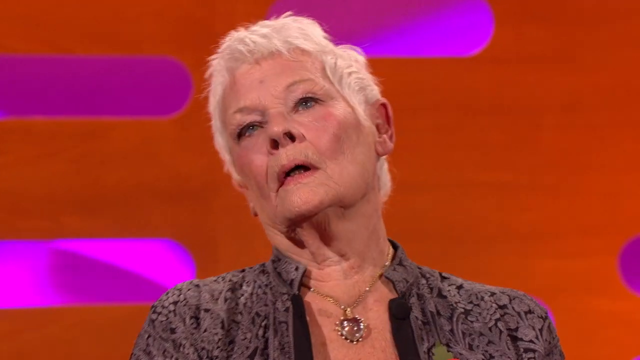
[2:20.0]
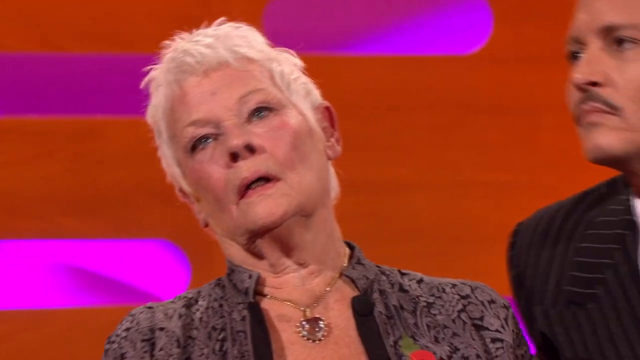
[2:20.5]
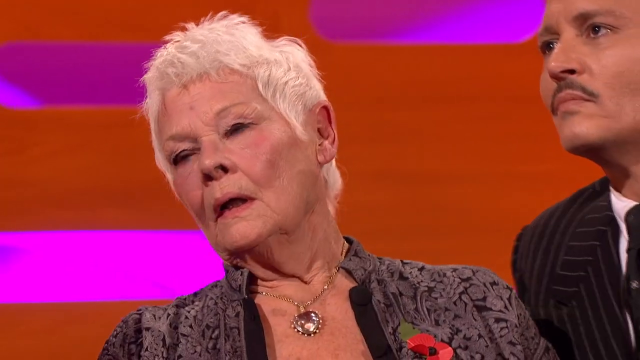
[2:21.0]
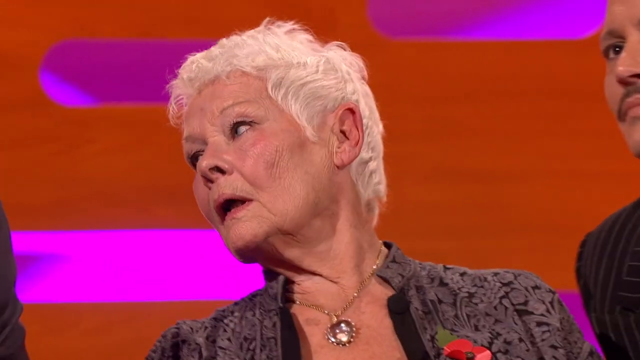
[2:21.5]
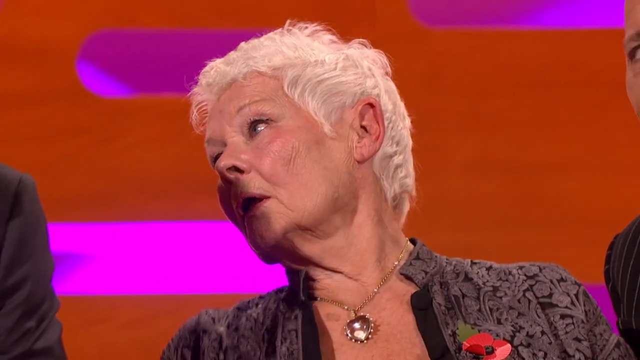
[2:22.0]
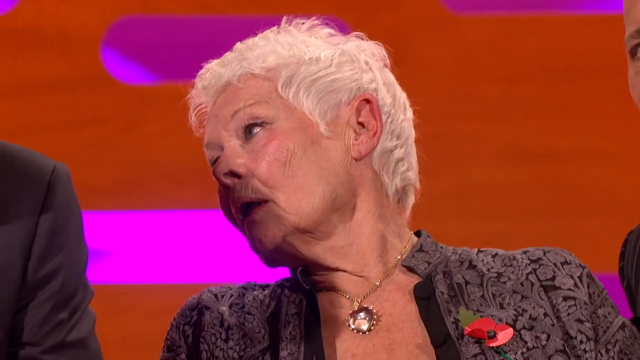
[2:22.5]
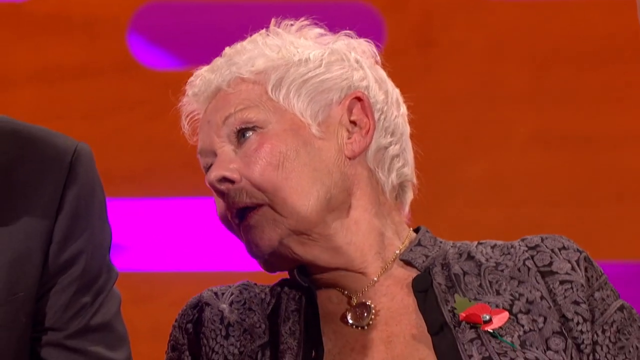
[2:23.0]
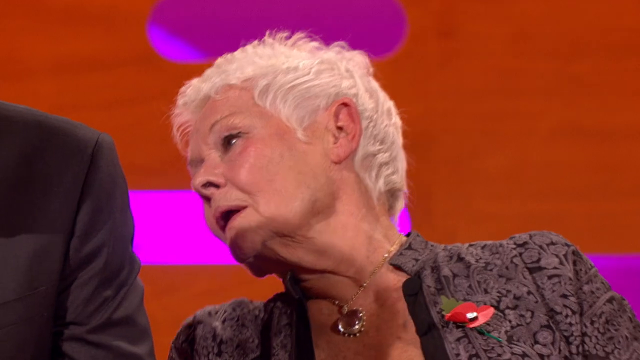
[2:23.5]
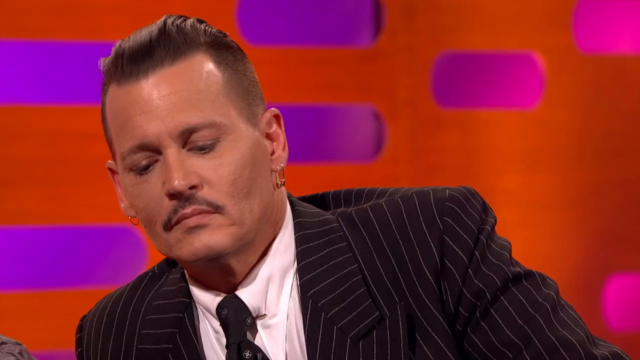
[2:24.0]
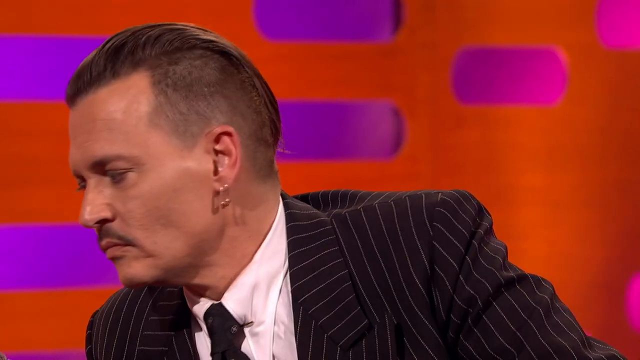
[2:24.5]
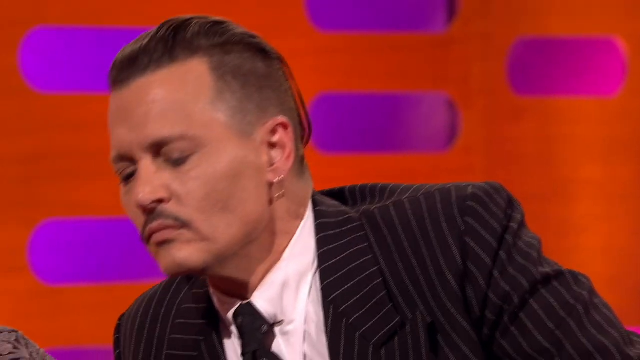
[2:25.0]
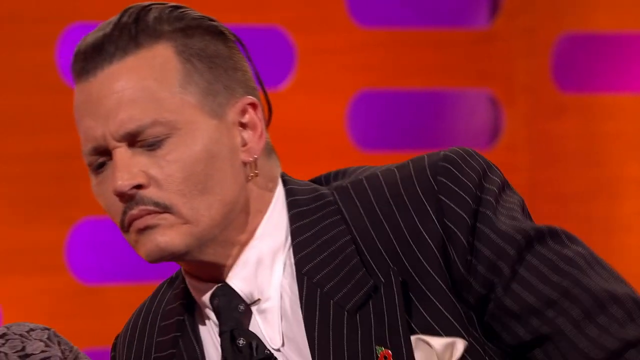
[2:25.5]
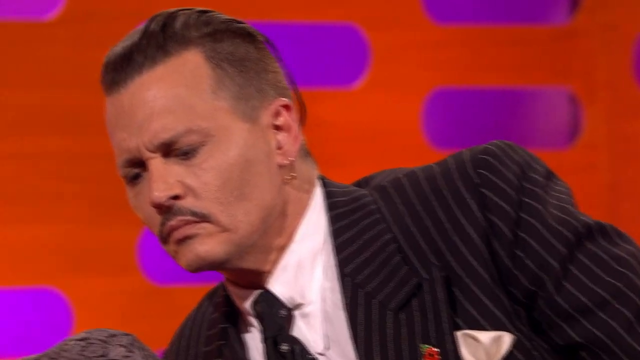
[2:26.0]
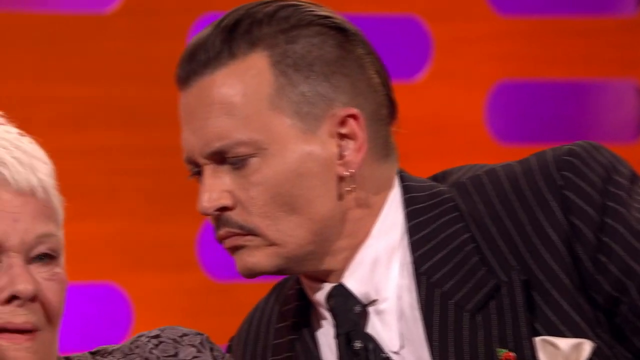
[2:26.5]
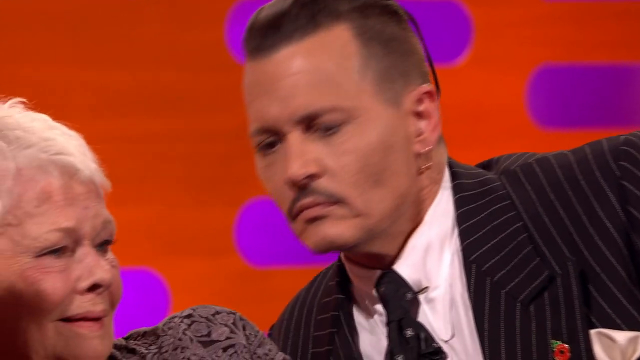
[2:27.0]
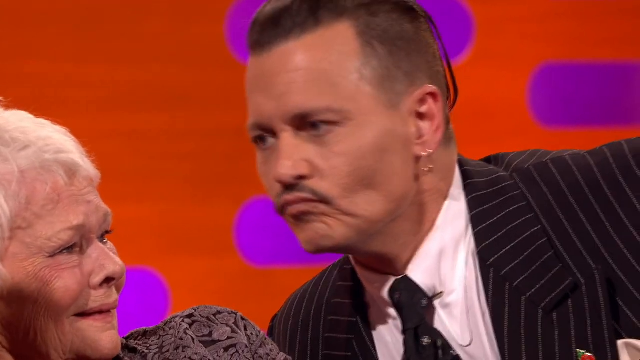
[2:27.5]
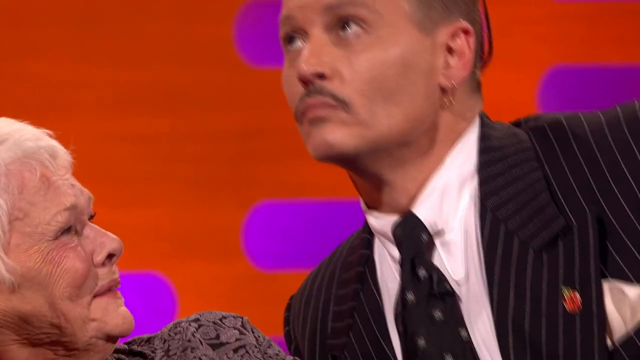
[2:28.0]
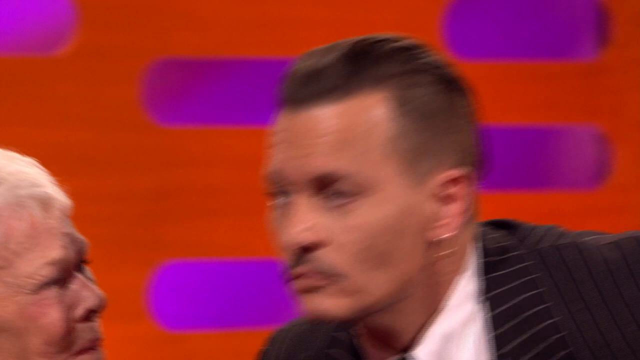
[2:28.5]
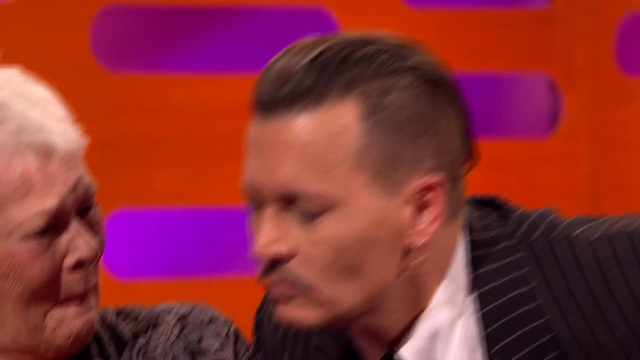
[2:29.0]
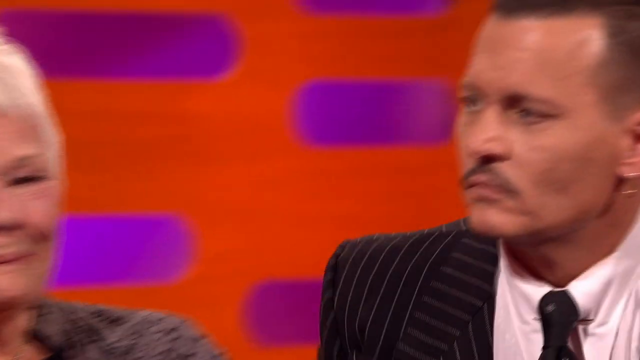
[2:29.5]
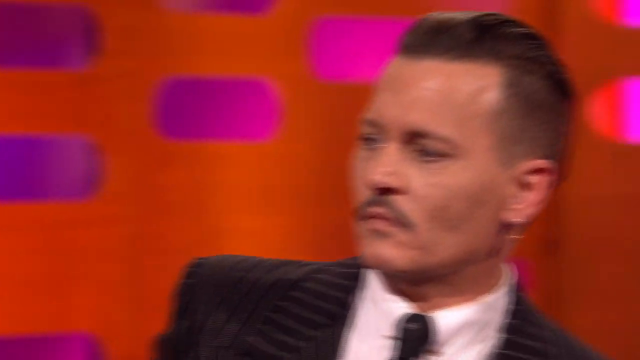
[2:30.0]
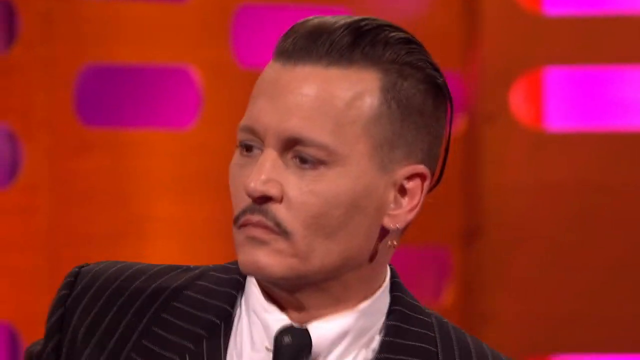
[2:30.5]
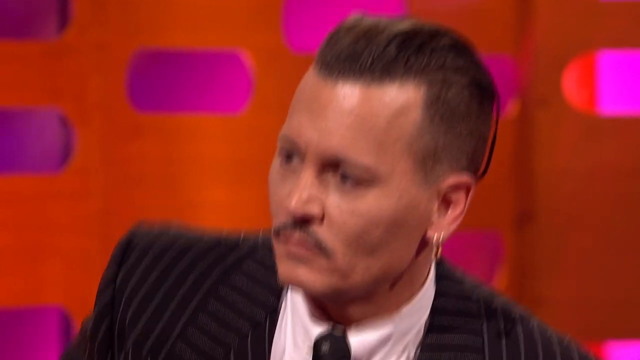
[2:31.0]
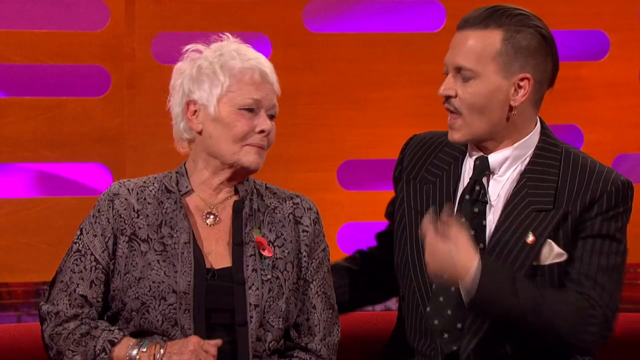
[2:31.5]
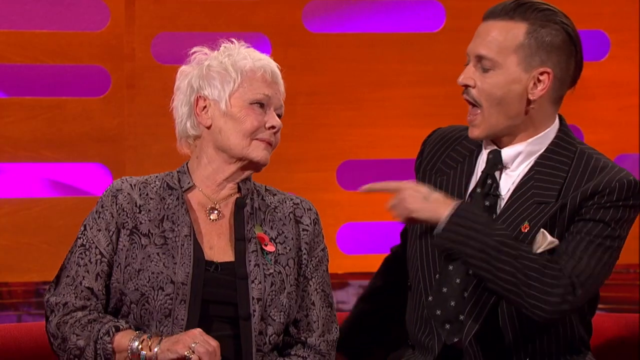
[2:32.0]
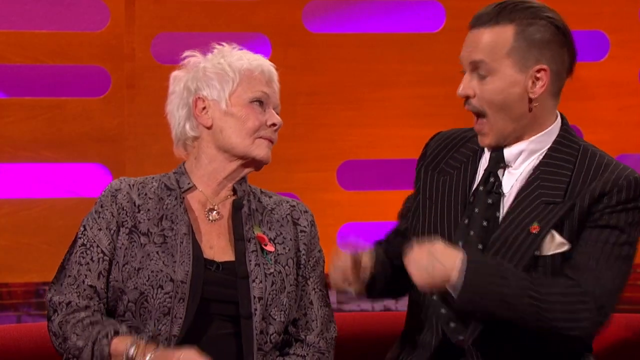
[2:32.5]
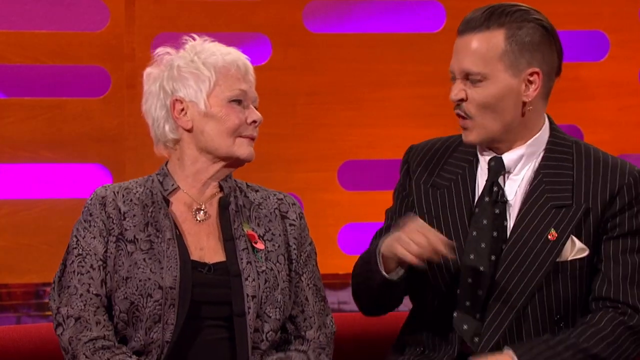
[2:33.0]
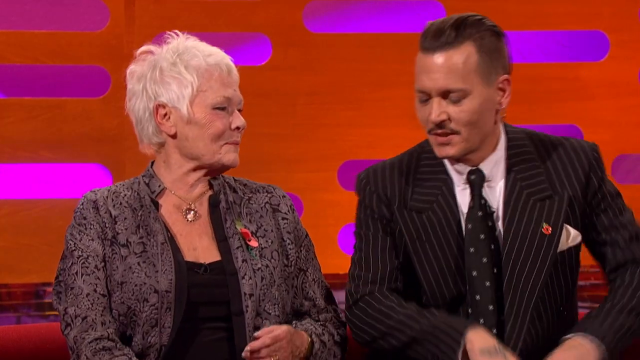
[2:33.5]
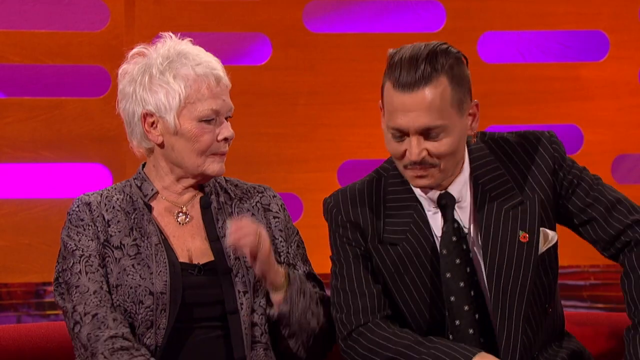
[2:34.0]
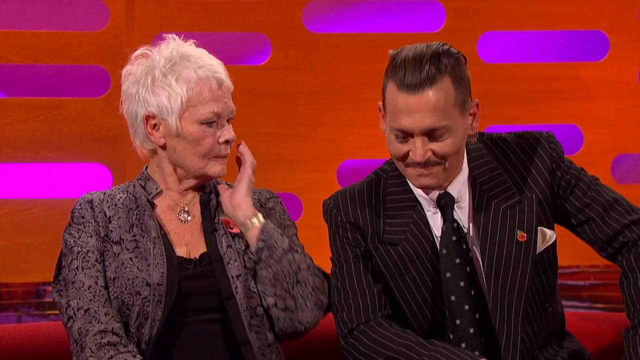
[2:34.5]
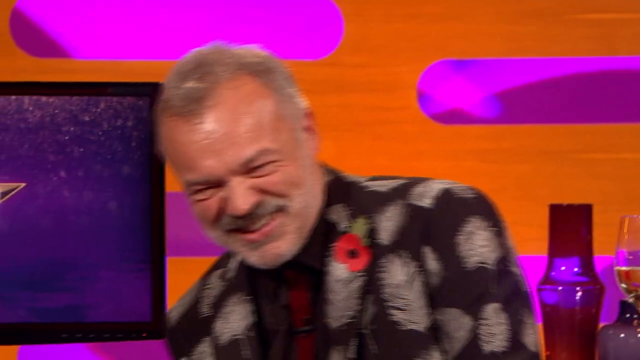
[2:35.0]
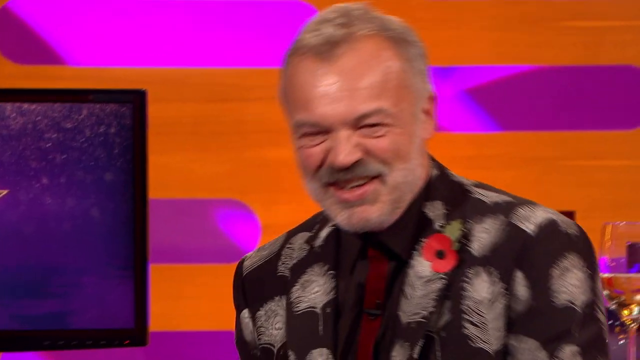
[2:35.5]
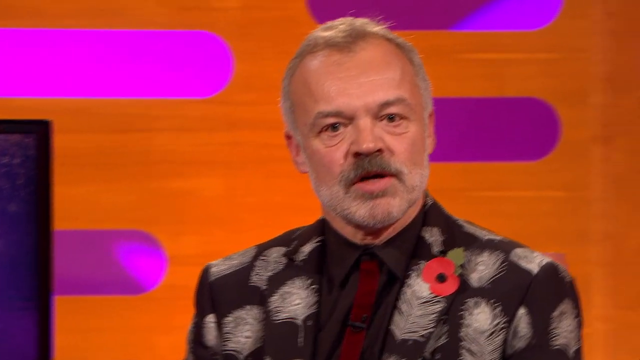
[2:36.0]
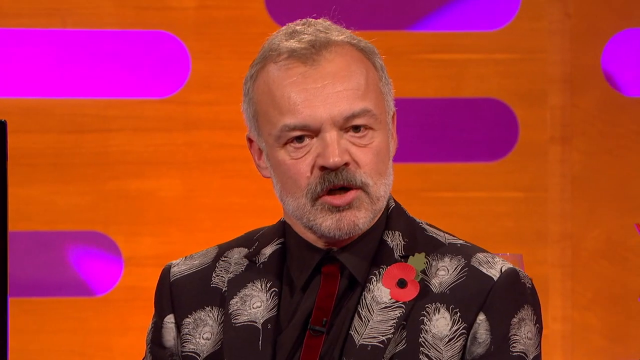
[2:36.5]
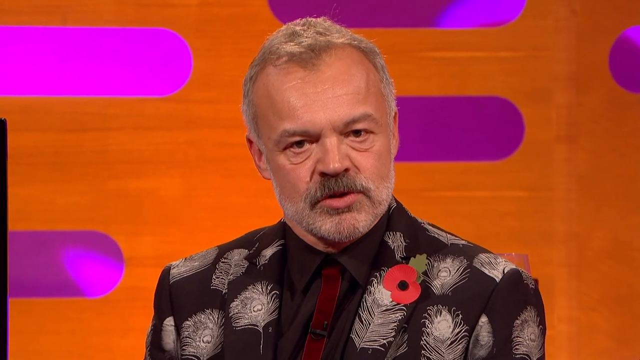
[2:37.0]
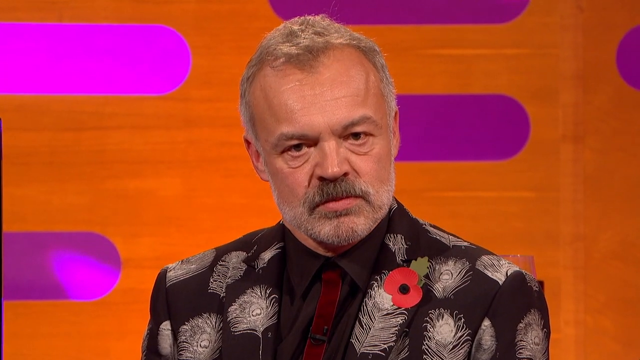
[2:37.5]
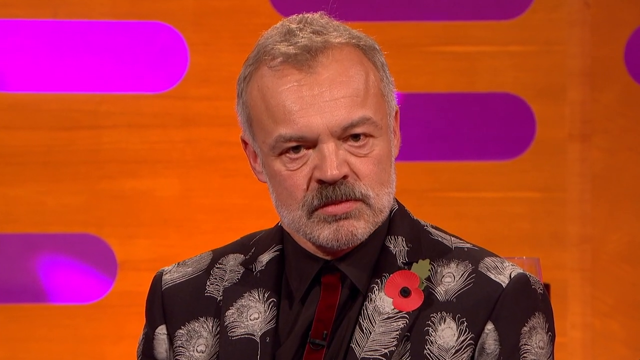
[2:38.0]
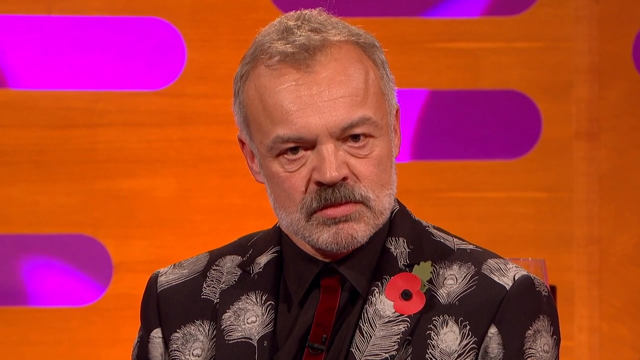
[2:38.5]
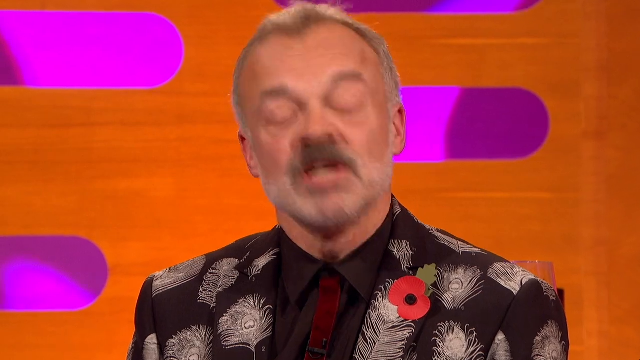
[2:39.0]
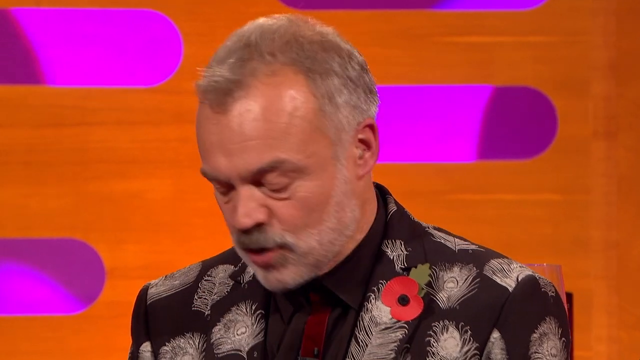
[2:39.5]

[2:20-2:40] The white-haired woman leans back, looking to her right and kind of hiding behind the man to her right. Johnny Depp appears to smell the white-haired woman, getting close to her face, then leans back and adjusts his seating. He says something while pointing at her with his left hand, seemingly suggesting her secret is safe with him. The camera pans to the host, who looks directly at the camera. Johnny Depp smells the woman again; he apparently says "I know it was you," puts his left hand on his left knee, and looks down at the floor while facing toward her, grinning as if he knows she is the one who passed gas. She puts her left hand on her mouth, and the host laughs, then gets serious for a second.